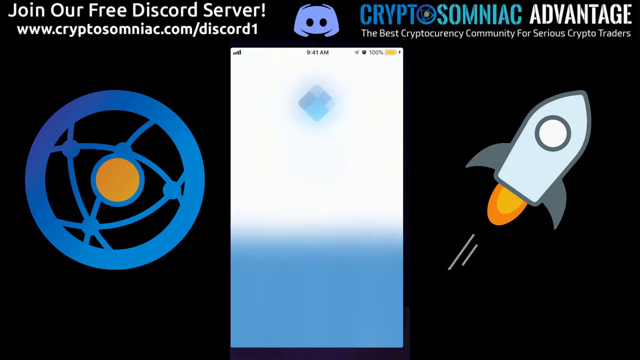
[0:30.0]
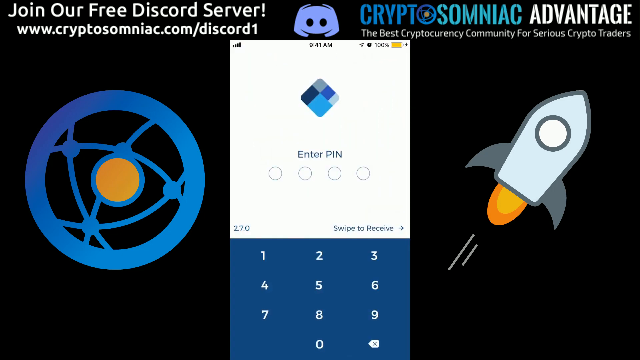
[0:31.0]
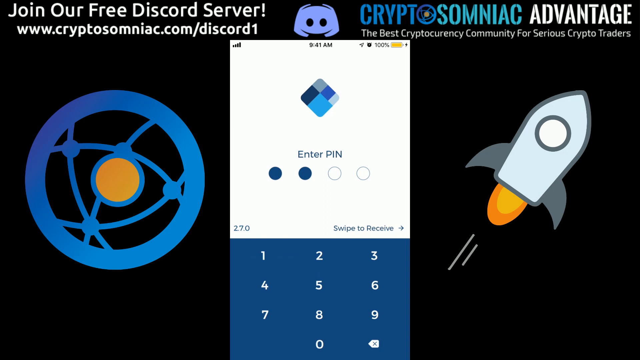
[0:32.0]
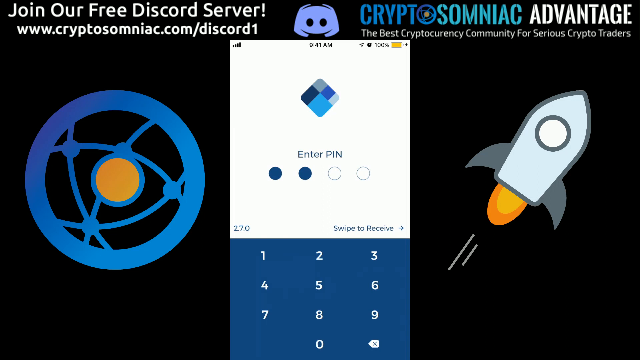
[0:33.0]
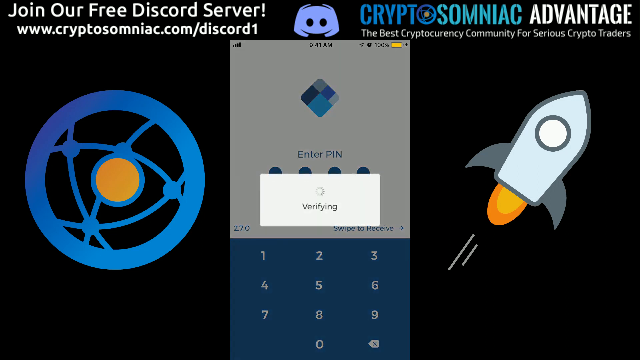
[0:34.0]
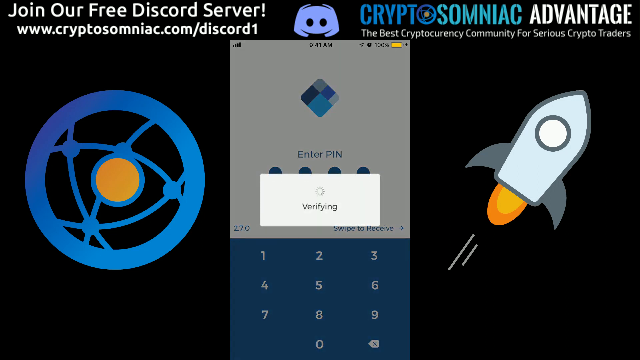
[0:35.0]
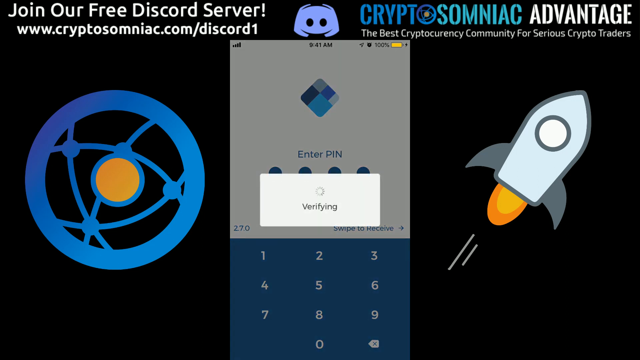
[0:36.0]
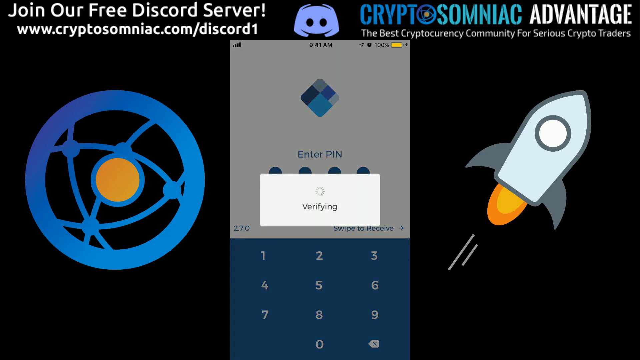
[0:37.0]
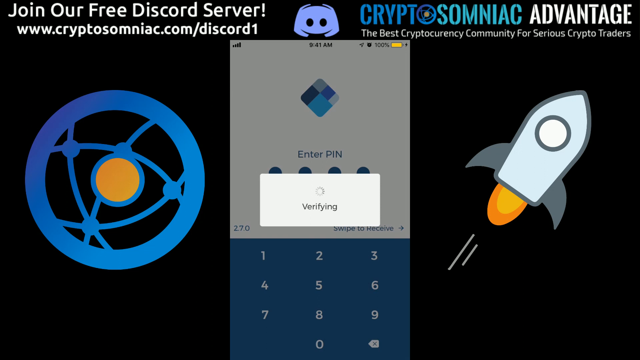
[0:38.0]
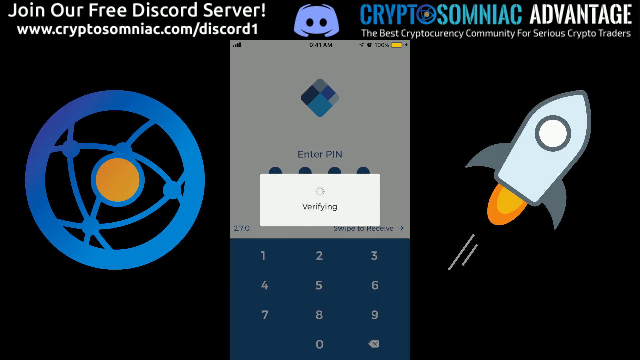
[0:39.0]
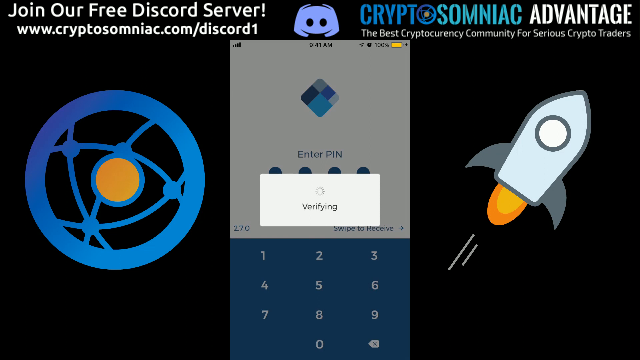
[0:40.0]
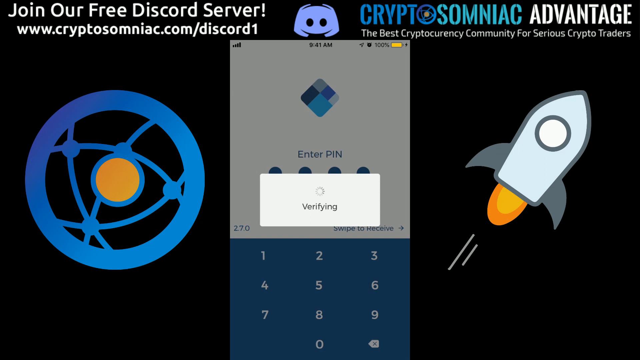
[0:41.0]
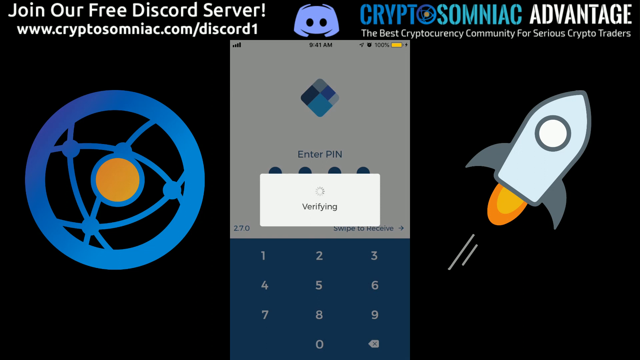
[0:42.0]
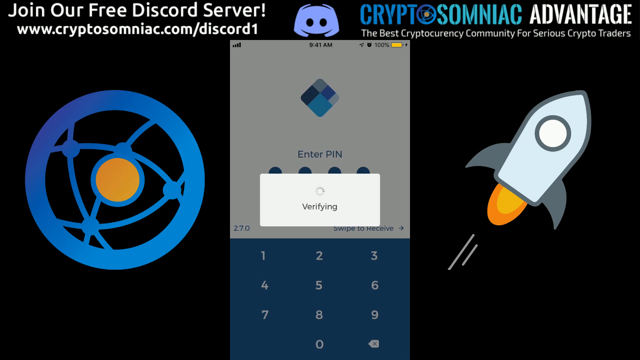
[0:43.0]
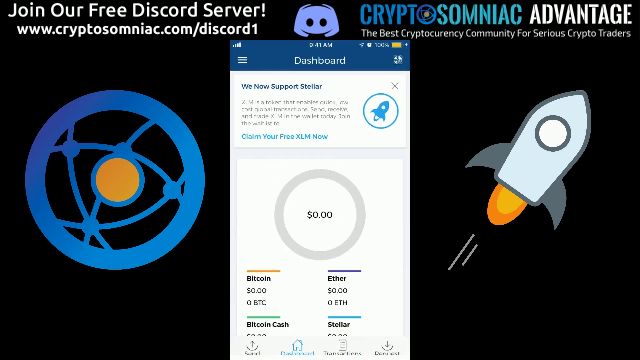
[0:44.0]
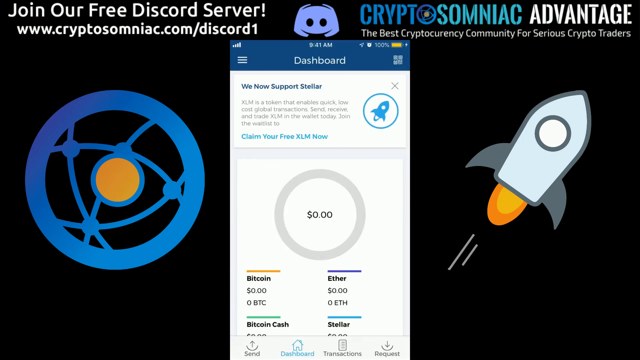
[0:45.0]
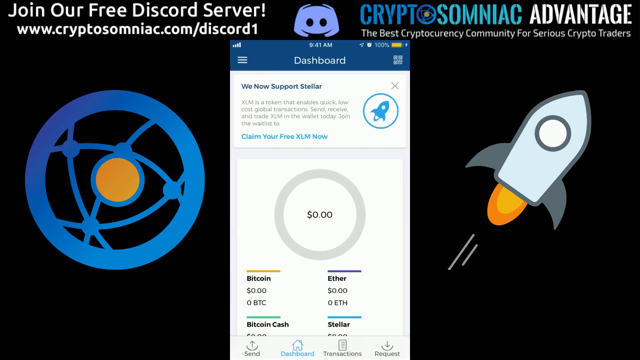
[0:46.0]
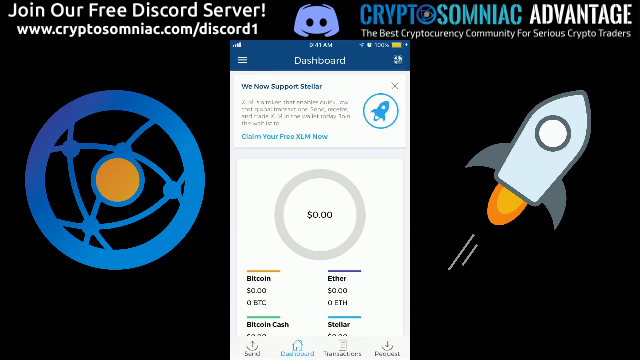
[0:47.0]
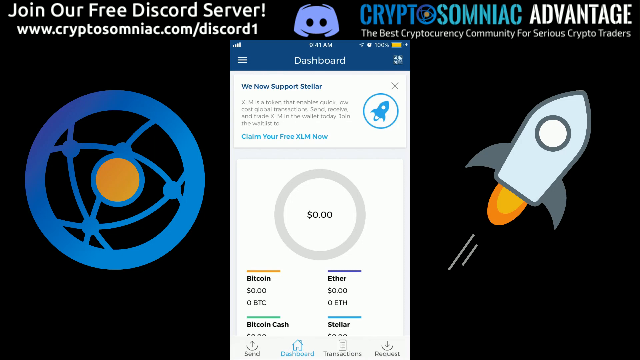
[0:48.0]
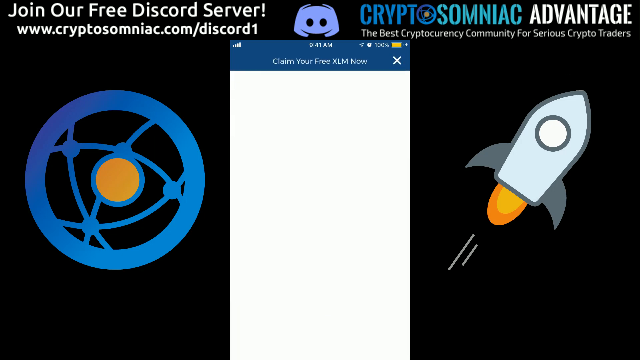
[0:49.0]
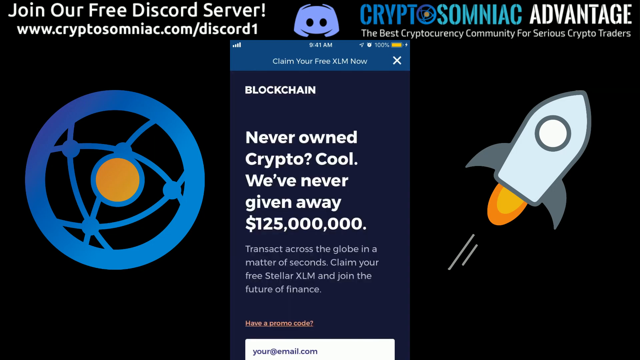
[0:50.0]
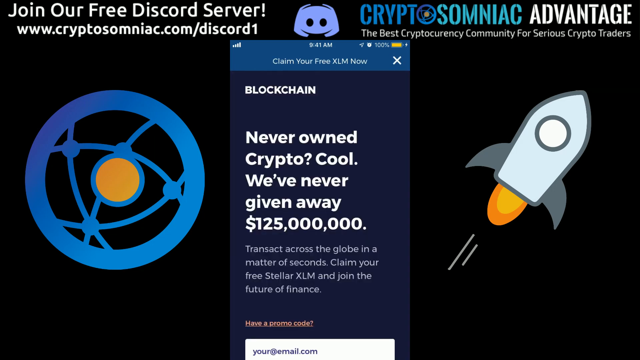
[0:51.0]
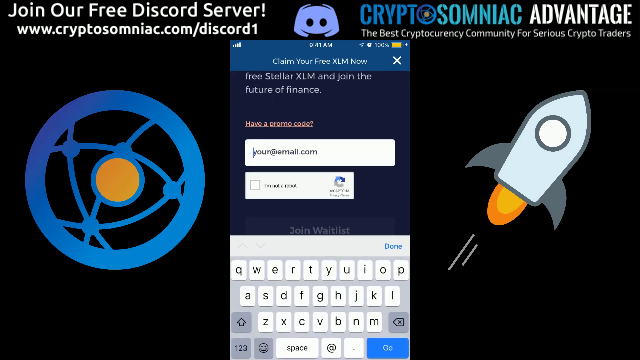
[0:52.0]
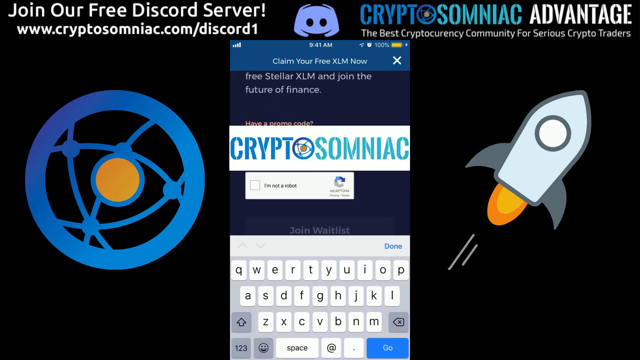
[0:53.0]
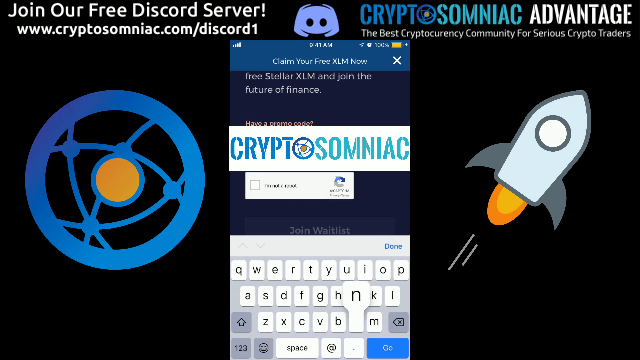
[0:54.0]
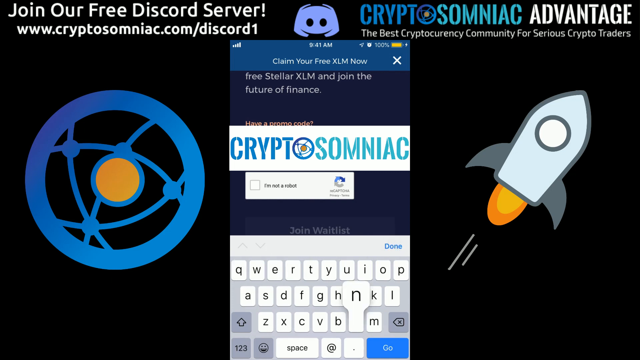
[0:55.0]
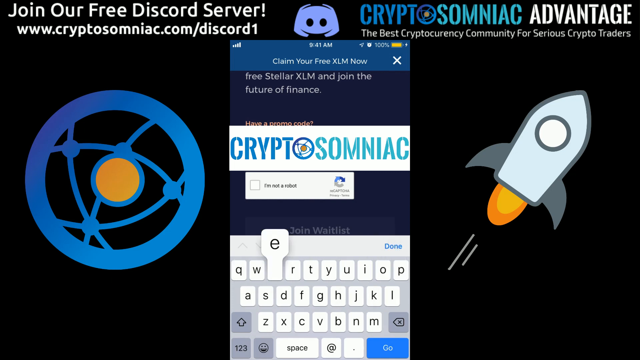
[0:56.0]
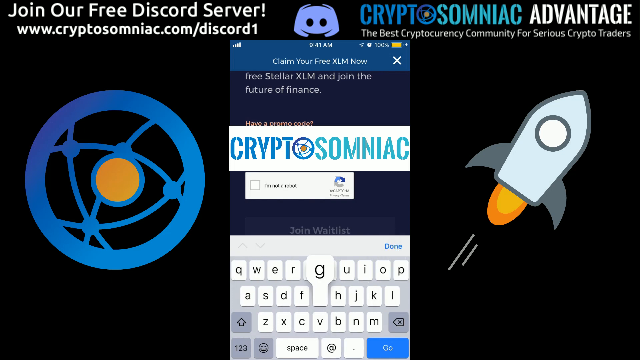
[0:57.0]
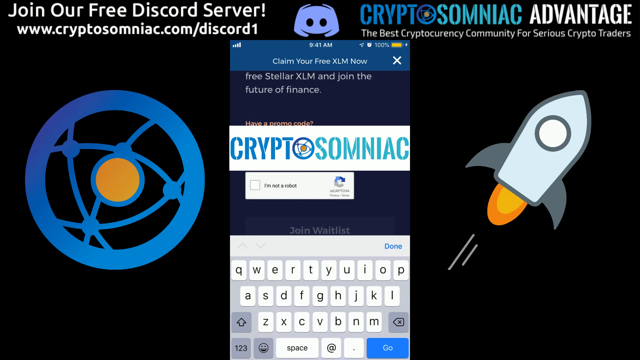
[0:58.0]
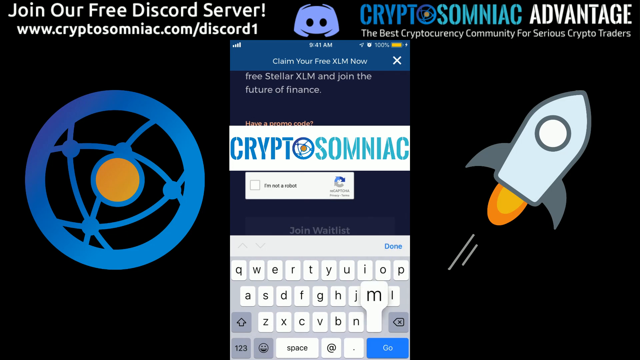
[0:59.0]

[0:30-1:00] The screen still shows CryptoSomniac with "join our free Discord server" and "CryptoSomniac Advantage." The O logo is on the left, a menu of some sort in the middle, and a rocket ship on the right. The menu now asks for a PIN and waits for verification; it is a four-digit PIN on a white background. After verification it goes to a dashboard, which says "we now support Stellar XLM as a token that enables quick and global transactions." The dashboard has Bitcoin, Ether, and other options, along with "never owned crypto," and goes through the steps of how to join the "future of finance" in a step-by-step menu showing how to log in. It then fades into a white screen for signing up for what CryptoSomniac offers.